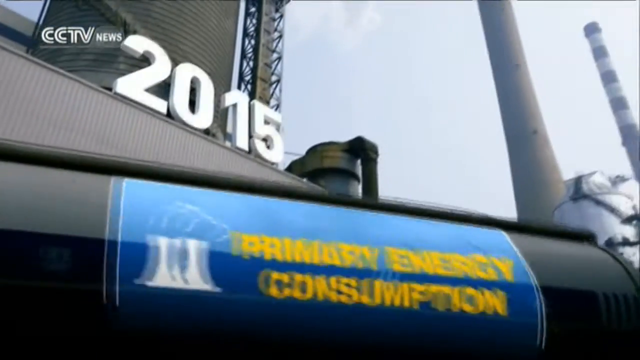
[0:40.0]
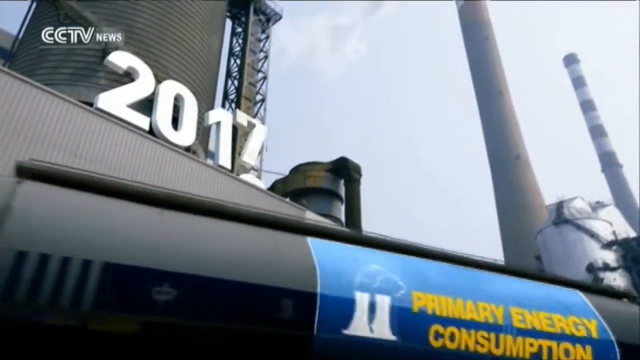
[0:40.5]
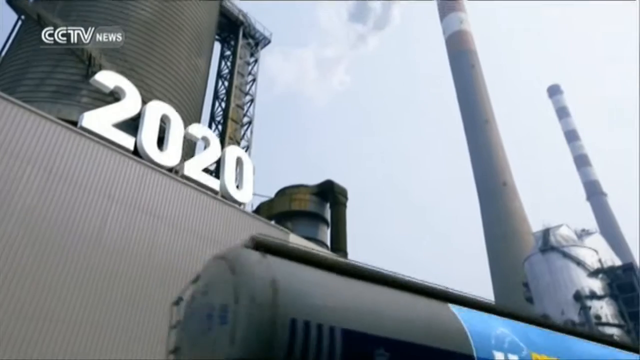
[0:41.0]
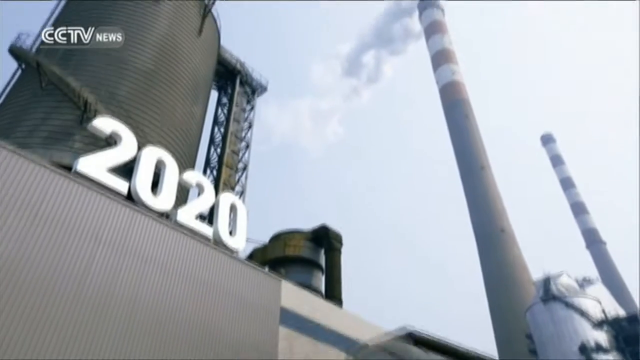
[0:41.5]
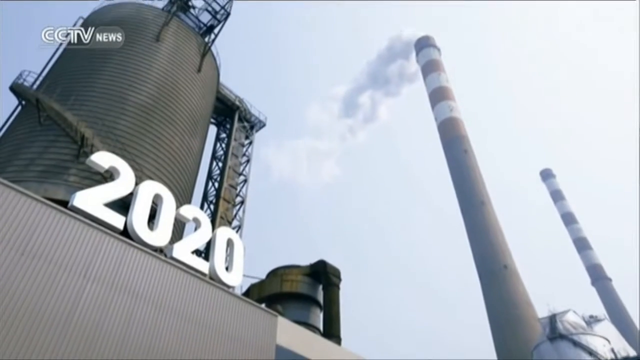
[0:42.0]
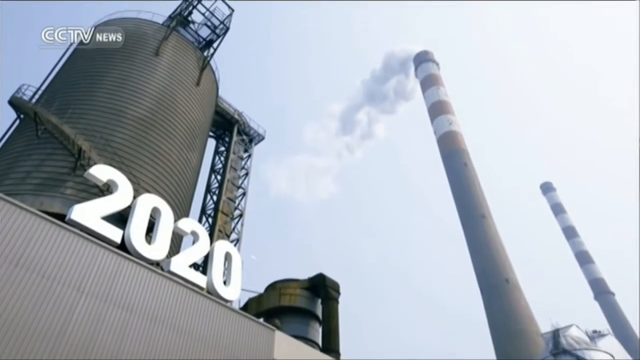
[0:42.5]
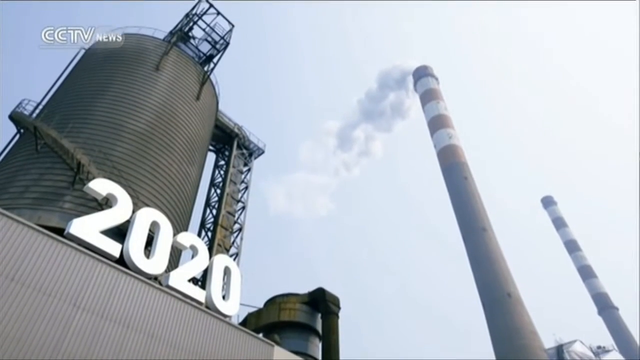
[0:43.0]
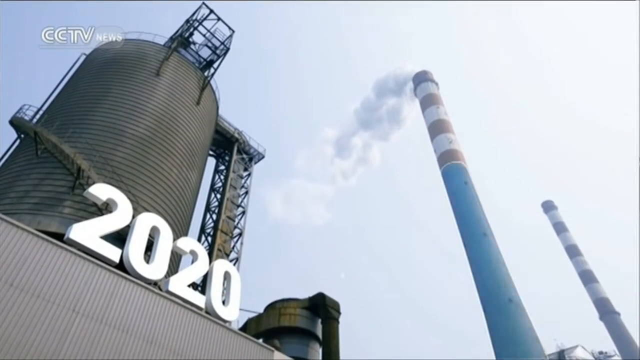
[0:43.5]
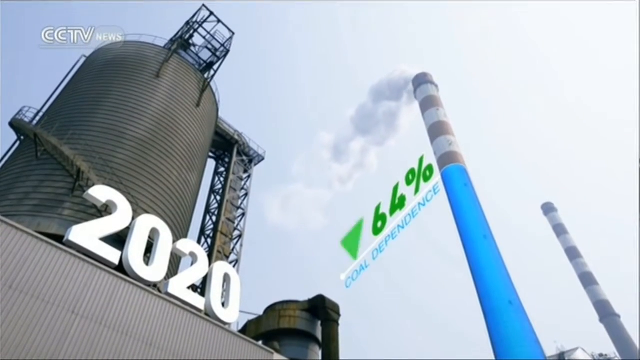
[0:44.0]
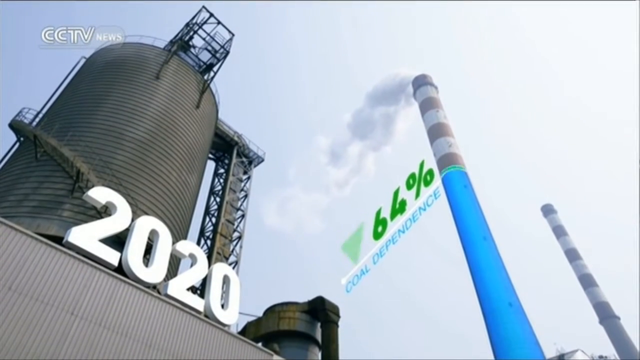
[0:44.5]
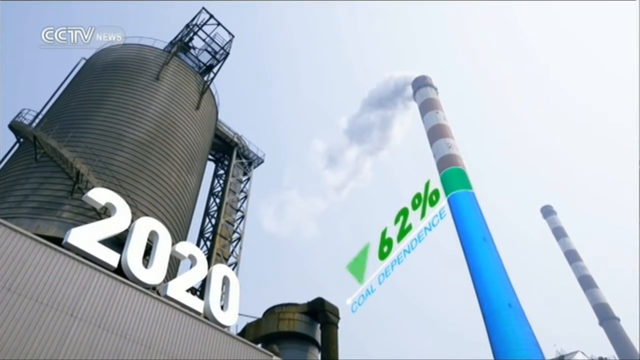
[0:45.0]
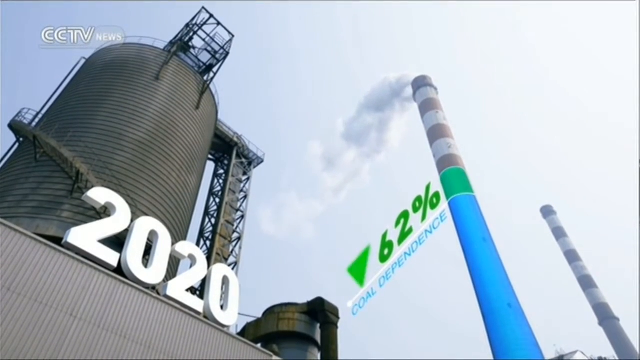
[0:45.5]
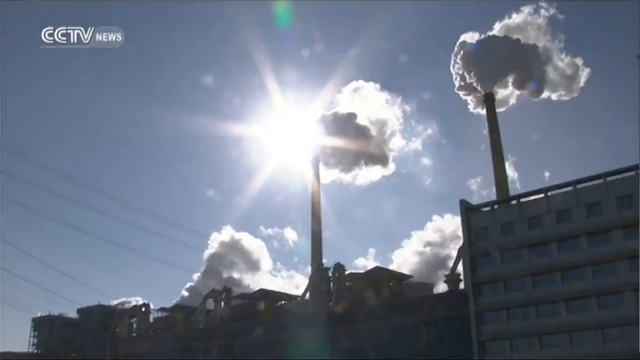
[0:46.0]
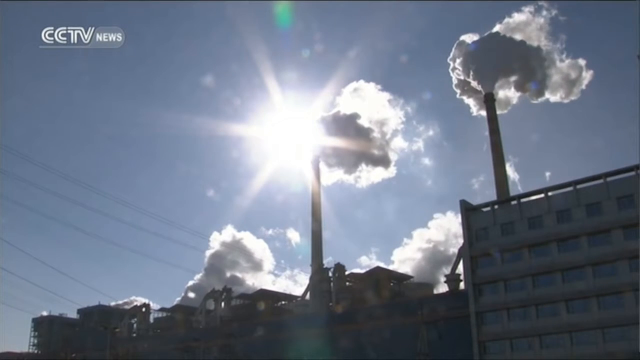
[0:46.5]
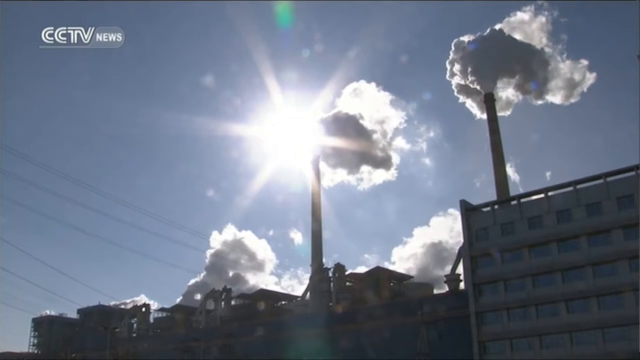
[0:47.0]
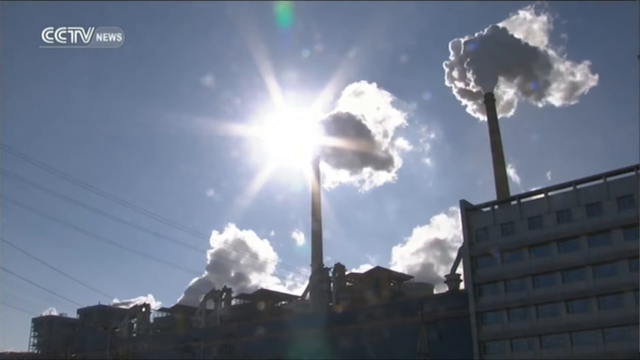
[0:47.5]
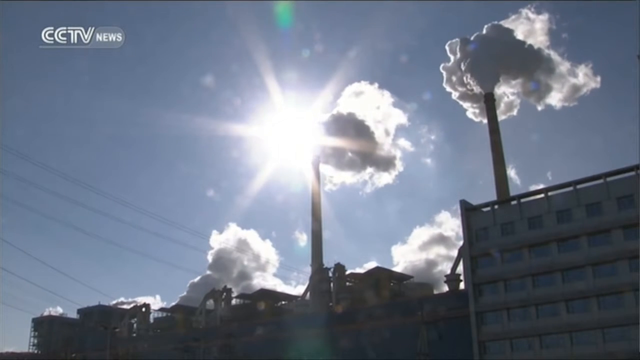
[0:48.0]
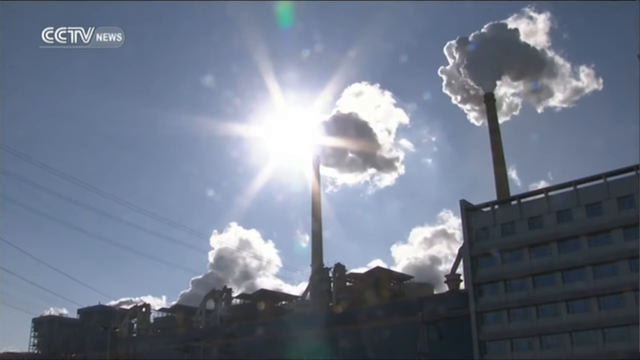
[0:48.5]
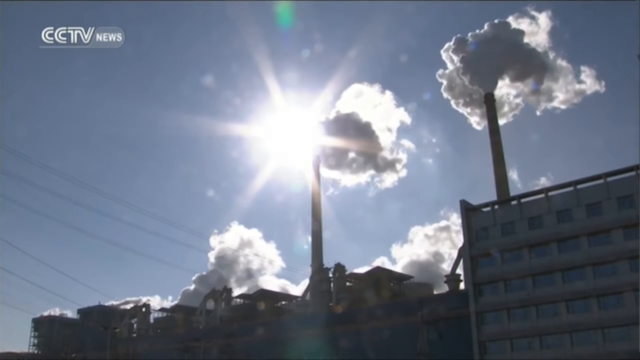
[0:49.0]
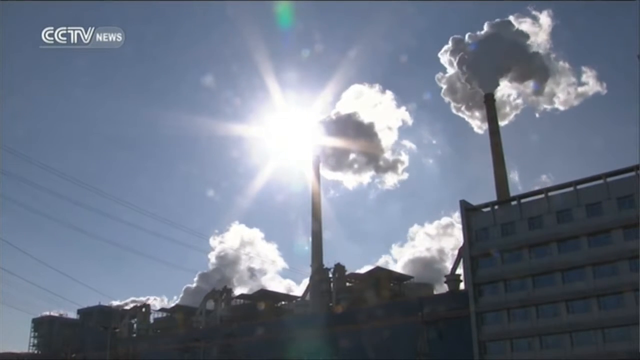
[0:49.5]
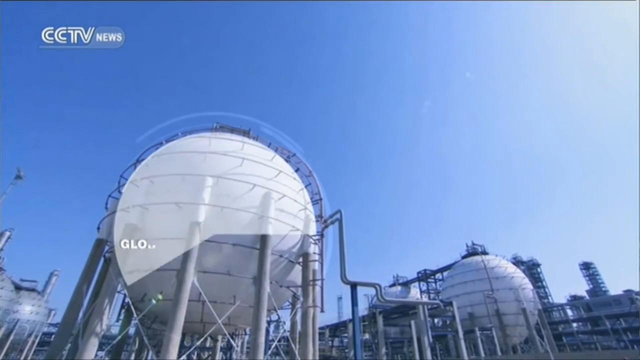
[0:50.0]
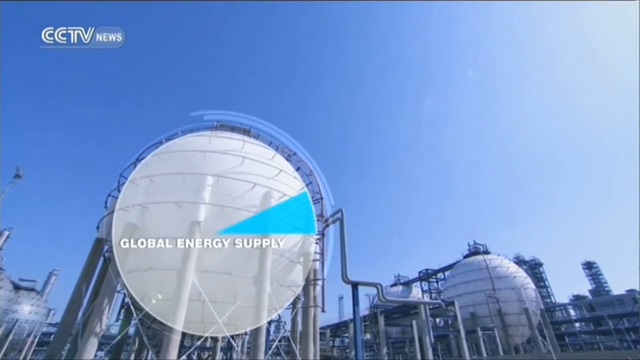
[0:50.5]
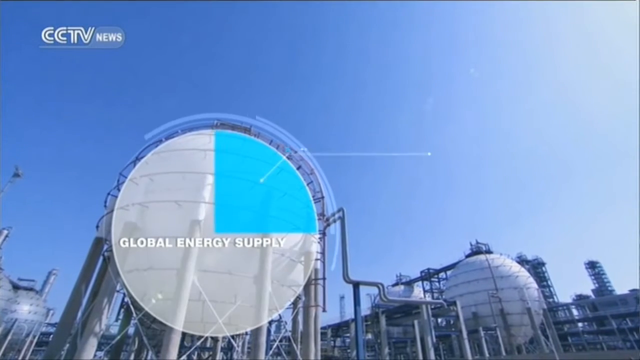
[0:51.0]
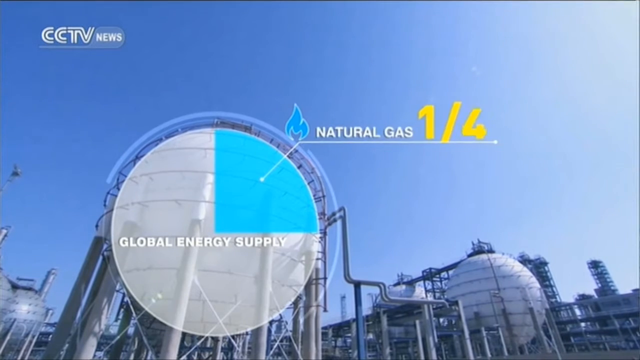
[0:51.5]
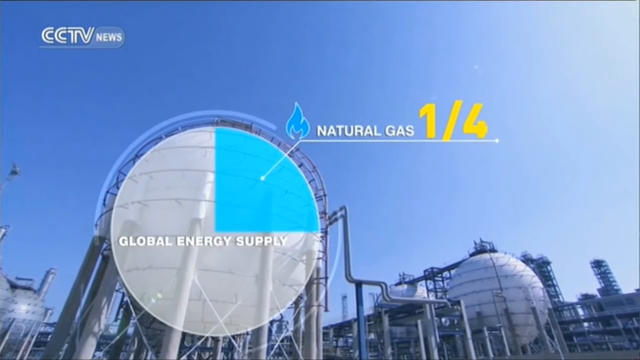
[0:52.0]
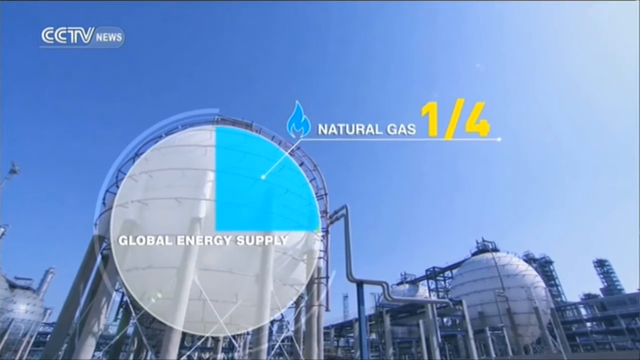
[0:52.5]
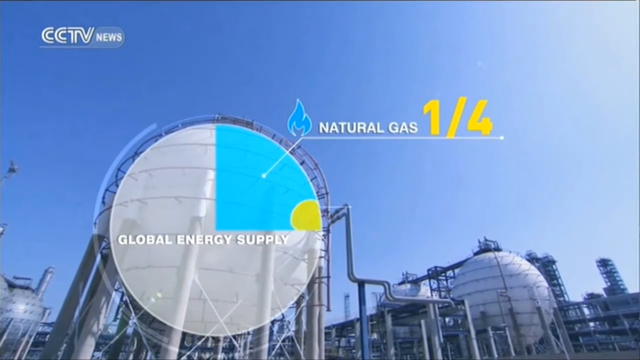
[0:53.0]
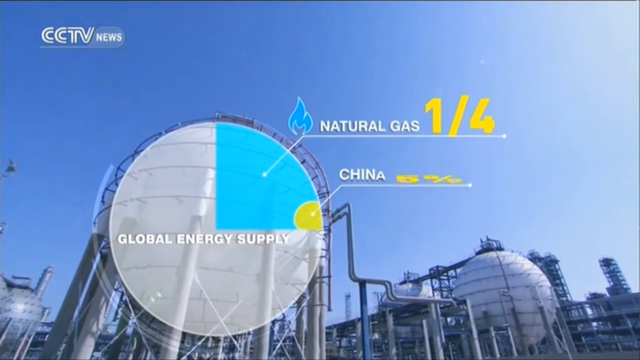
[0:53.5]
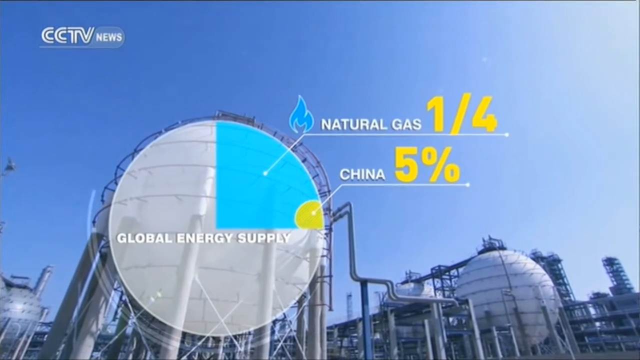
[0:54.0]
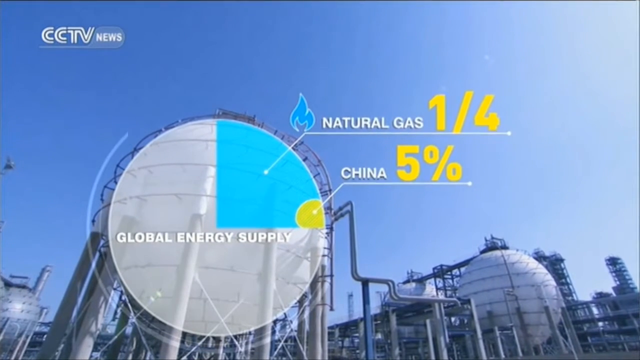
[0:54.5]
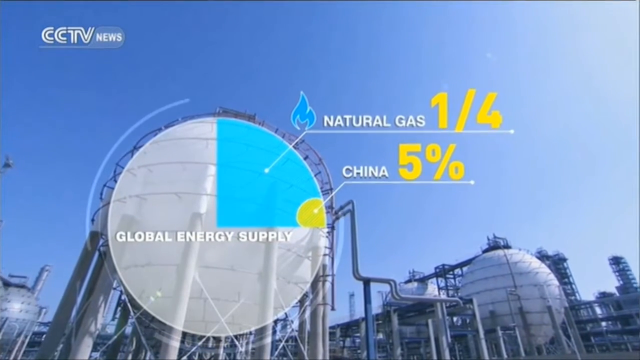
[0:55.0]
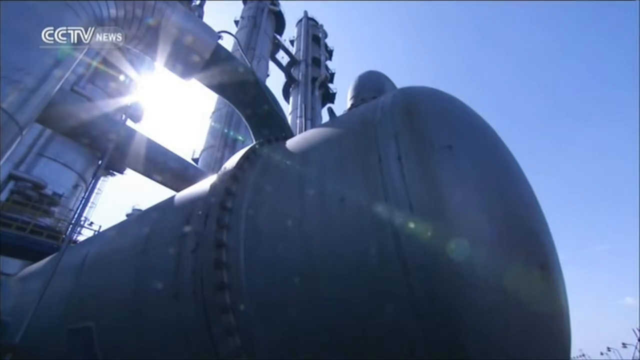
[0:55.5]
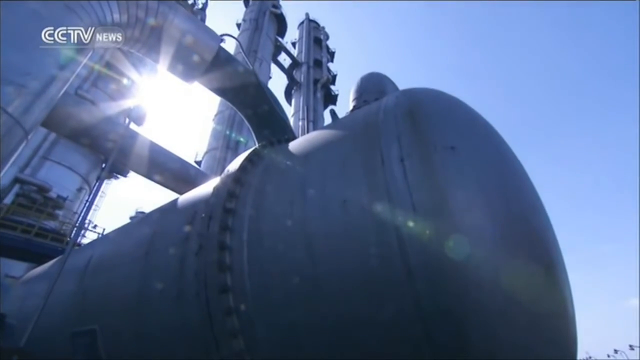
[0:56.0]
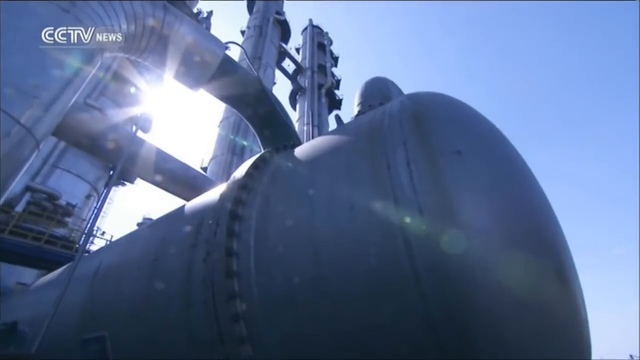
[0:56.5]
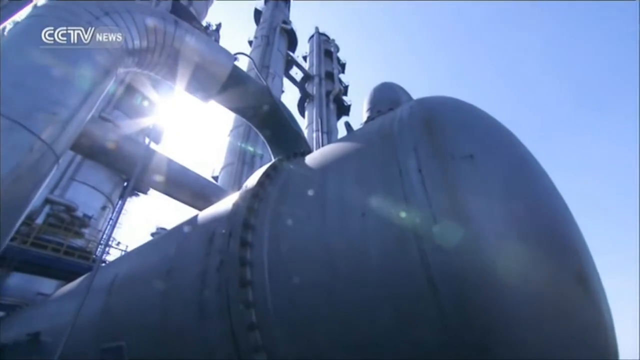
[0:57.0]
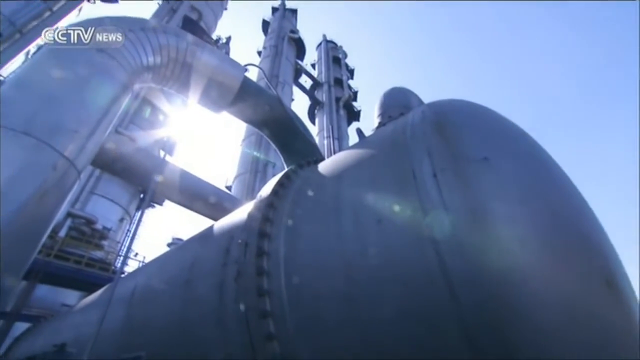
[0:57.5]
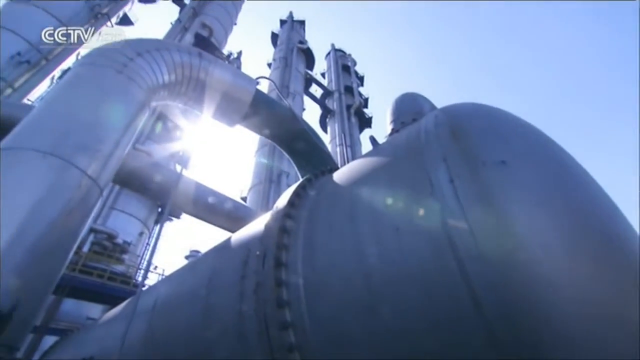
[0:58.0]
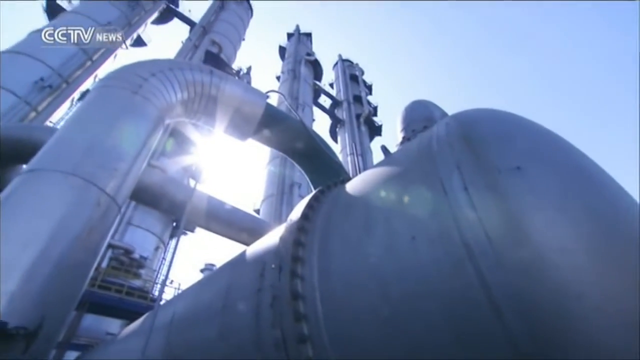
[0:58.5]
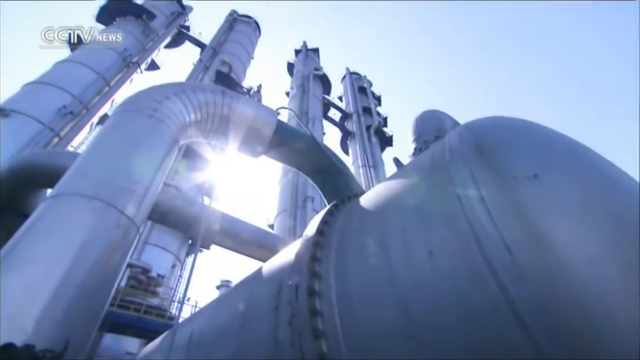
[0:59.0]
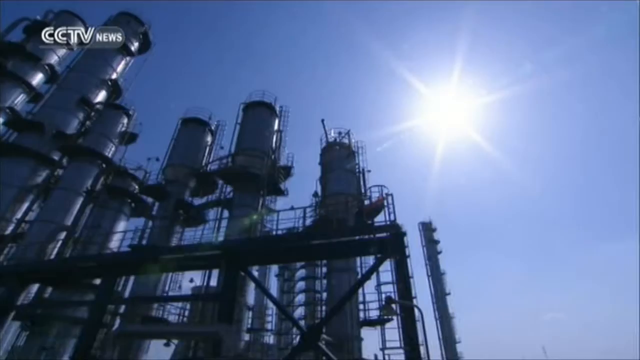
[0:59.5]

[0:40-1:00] With "CCTV news" on screen, big numbers read "2015" and "primary energy consumption" appears in yellow over two smokestacks, one white and one with red and white stripes. It is daytime and clear. The year scrolls quickly through 2016, 2017, 2018, 2019 and 2020. Gray smoke billows out of the top of a smokestack. Then "64%" appears in green and "coal dependence" in blue, with a green arrow flashing. The smoke continues coming out of the smokestacks, the sun shines brightly behind them, the sky is light blue, and several billows of smoke are visible in the air. Text then reads "global energy supply," "natural gas 1/4" and "China 5%."